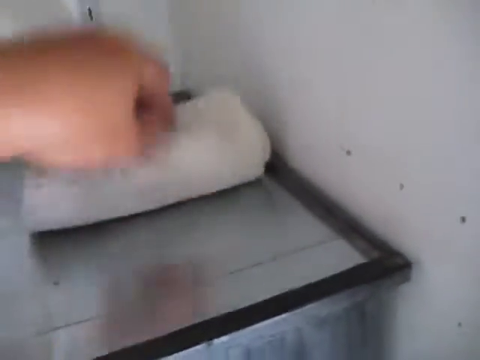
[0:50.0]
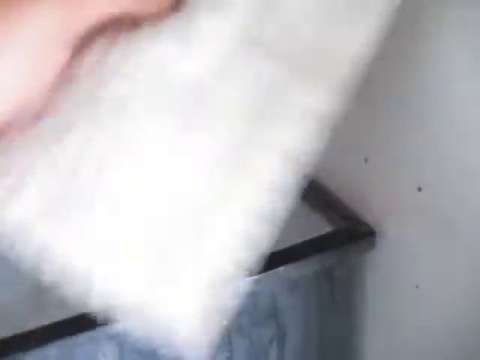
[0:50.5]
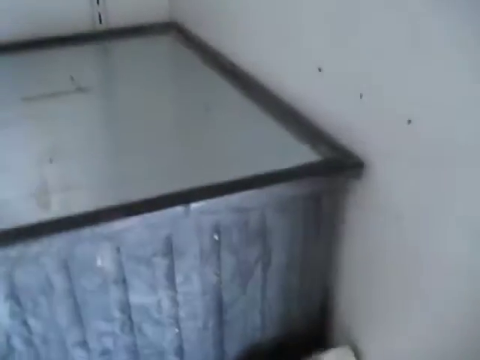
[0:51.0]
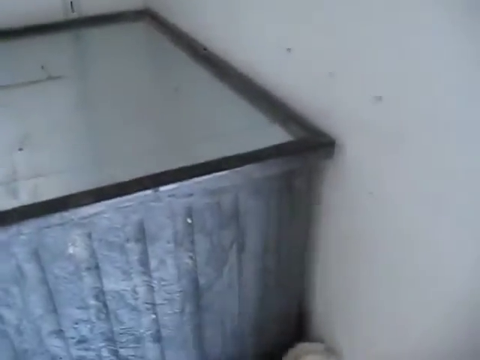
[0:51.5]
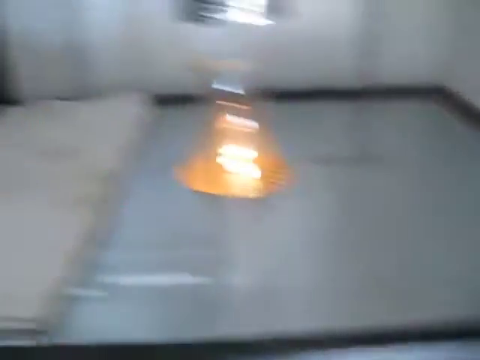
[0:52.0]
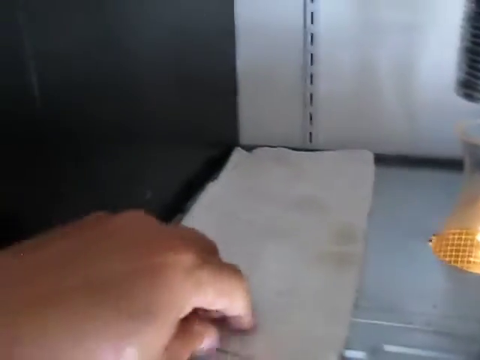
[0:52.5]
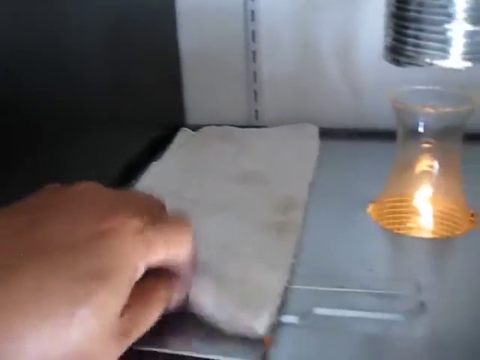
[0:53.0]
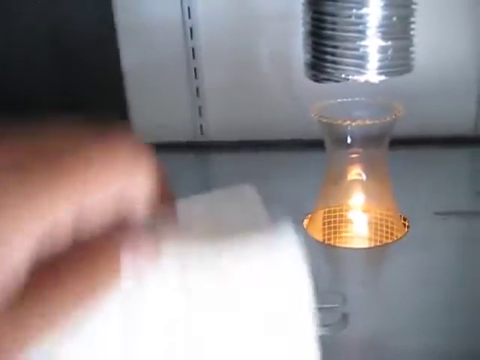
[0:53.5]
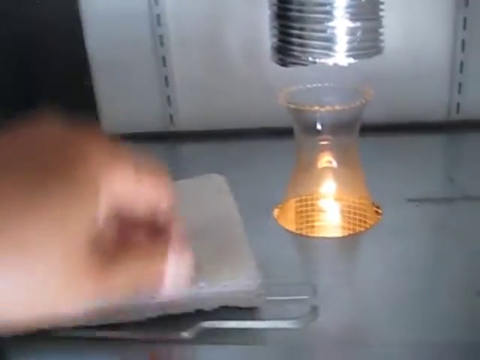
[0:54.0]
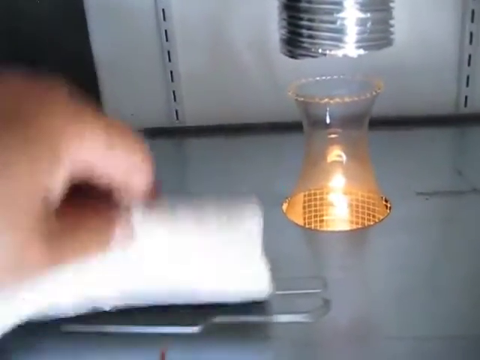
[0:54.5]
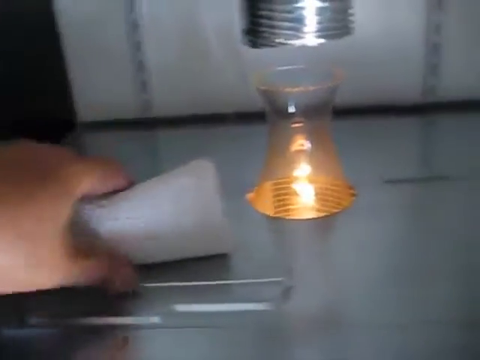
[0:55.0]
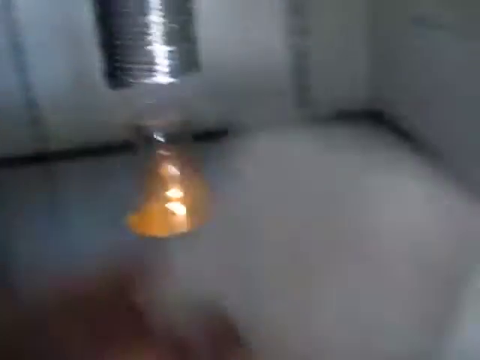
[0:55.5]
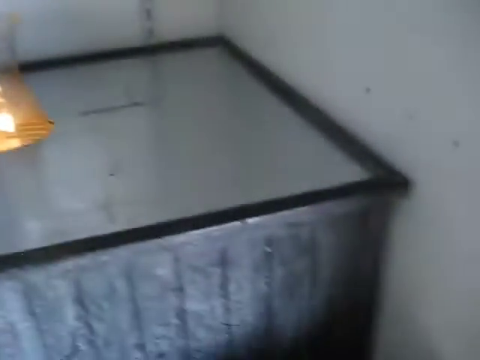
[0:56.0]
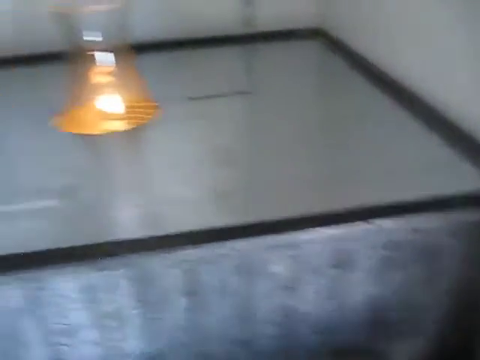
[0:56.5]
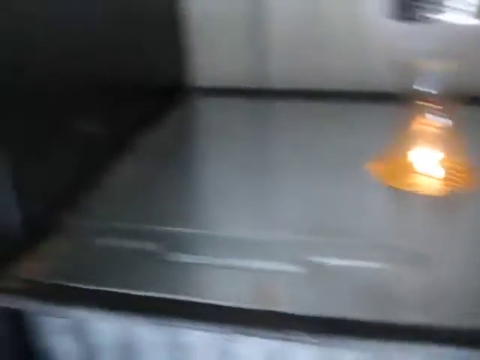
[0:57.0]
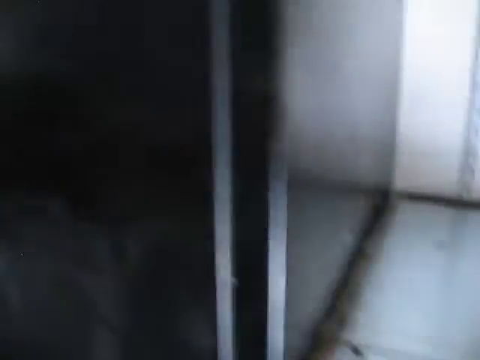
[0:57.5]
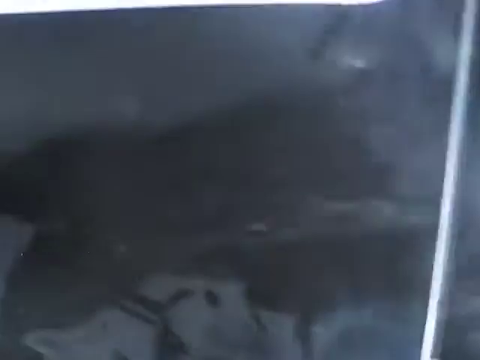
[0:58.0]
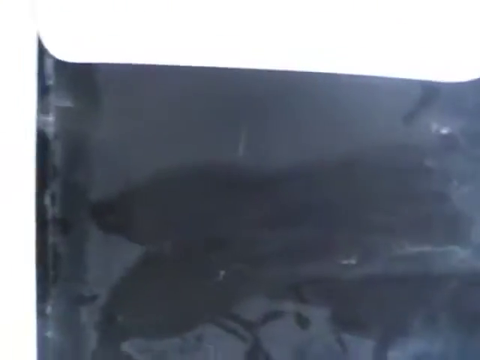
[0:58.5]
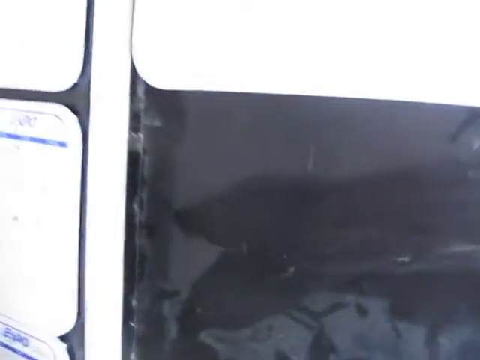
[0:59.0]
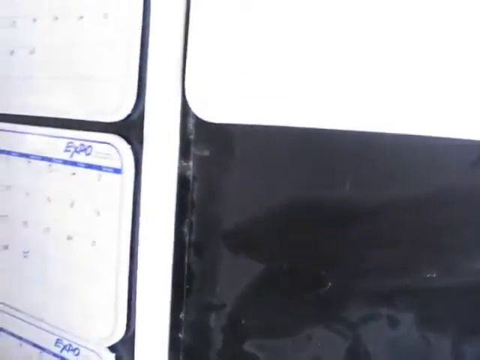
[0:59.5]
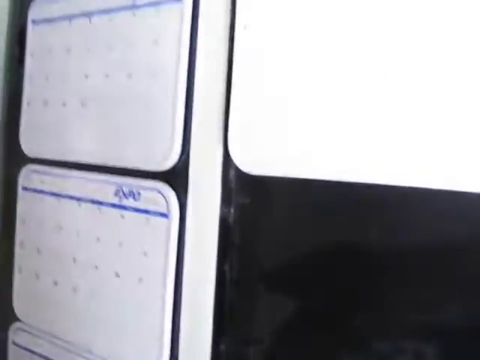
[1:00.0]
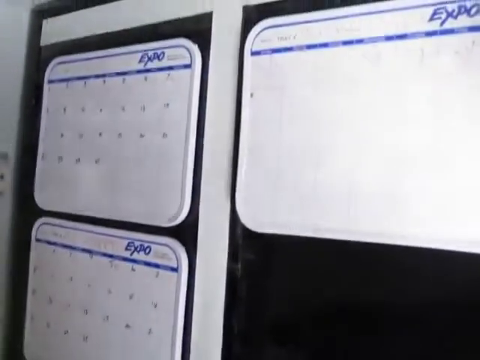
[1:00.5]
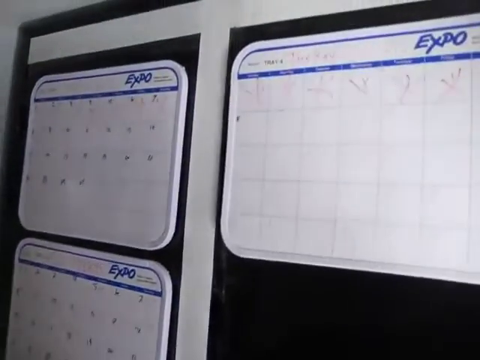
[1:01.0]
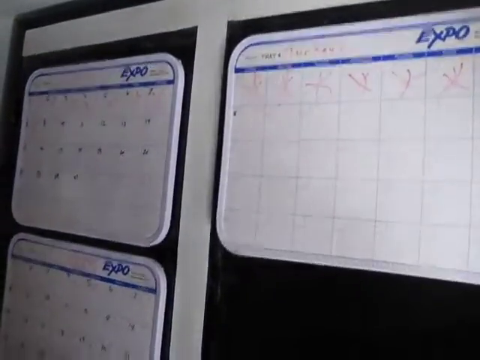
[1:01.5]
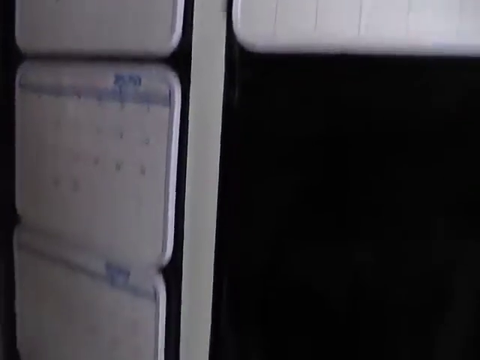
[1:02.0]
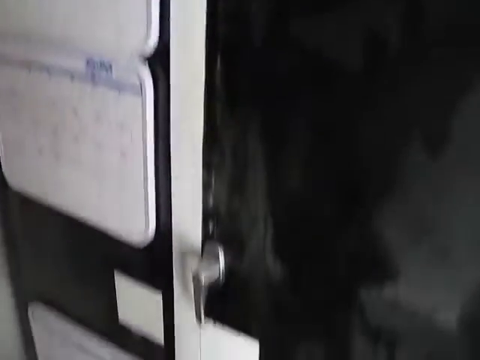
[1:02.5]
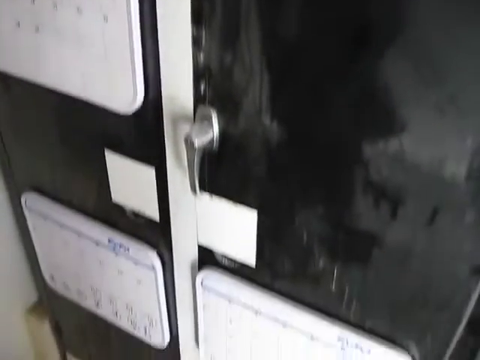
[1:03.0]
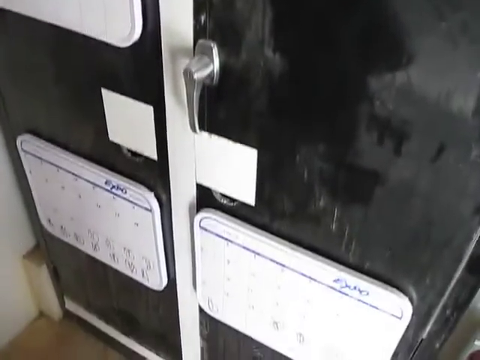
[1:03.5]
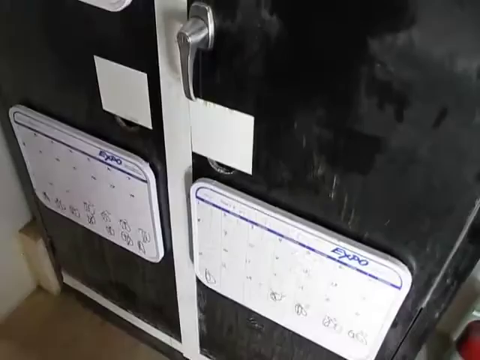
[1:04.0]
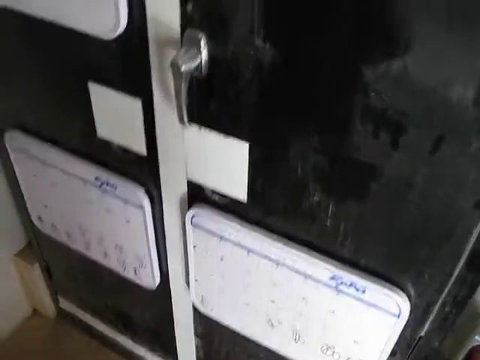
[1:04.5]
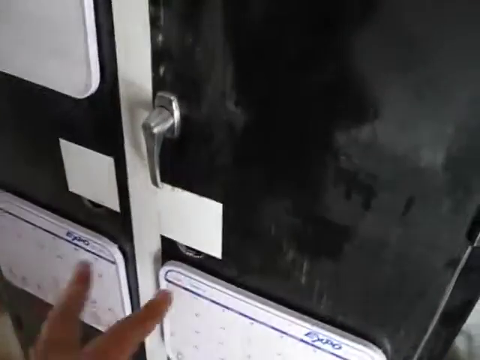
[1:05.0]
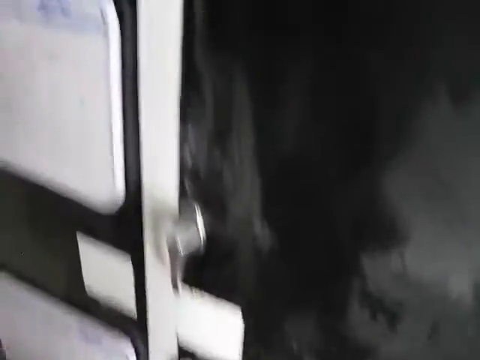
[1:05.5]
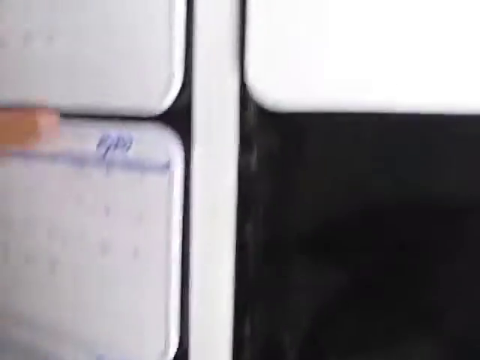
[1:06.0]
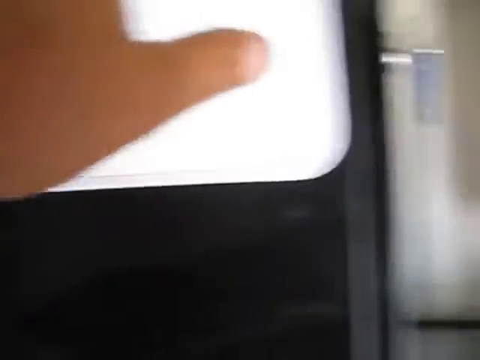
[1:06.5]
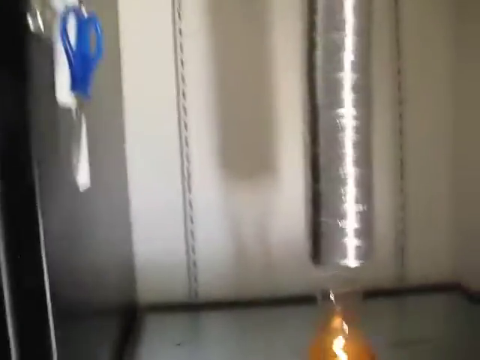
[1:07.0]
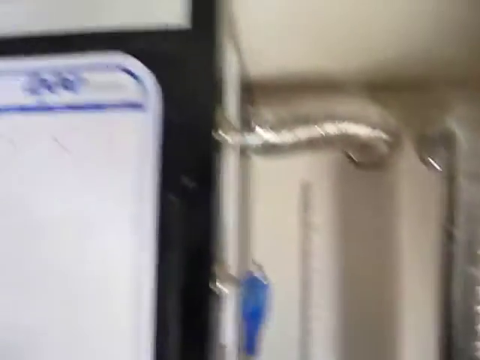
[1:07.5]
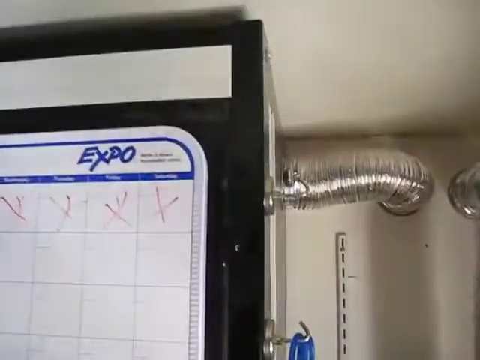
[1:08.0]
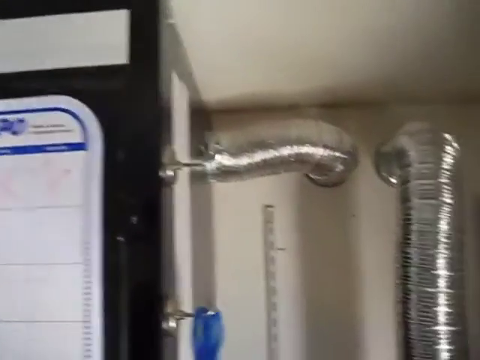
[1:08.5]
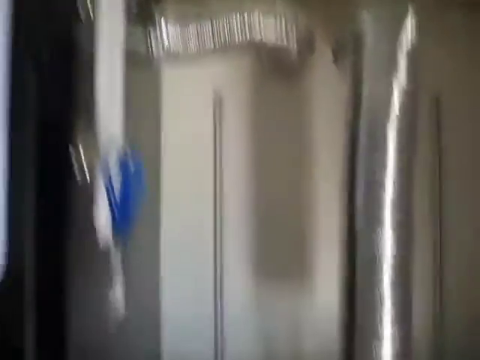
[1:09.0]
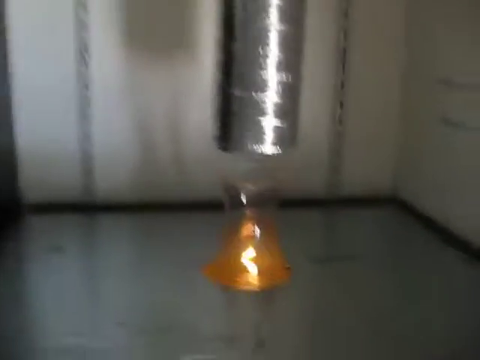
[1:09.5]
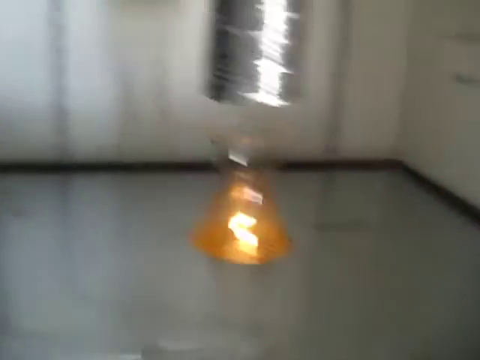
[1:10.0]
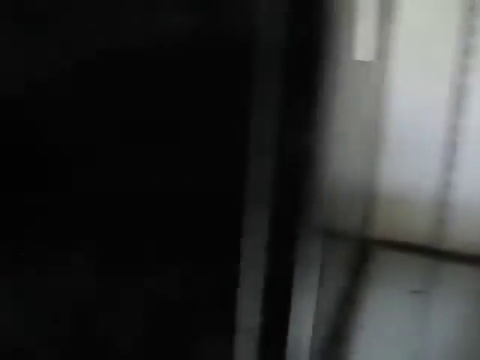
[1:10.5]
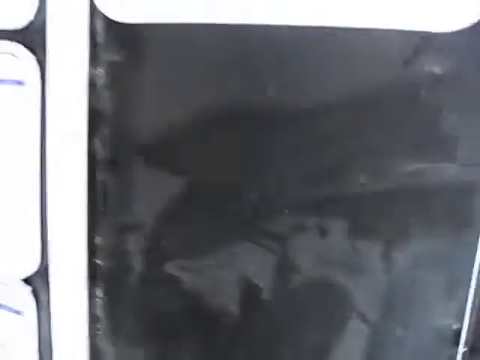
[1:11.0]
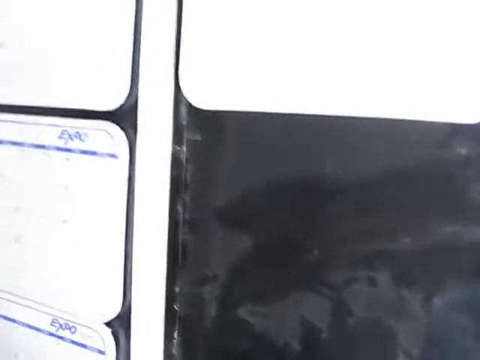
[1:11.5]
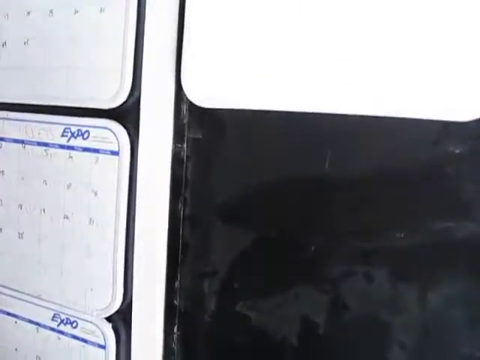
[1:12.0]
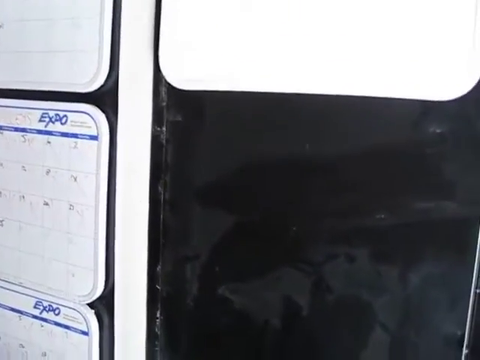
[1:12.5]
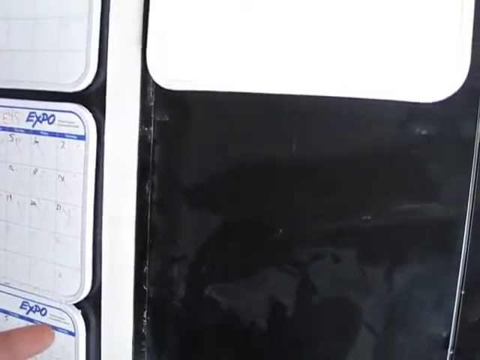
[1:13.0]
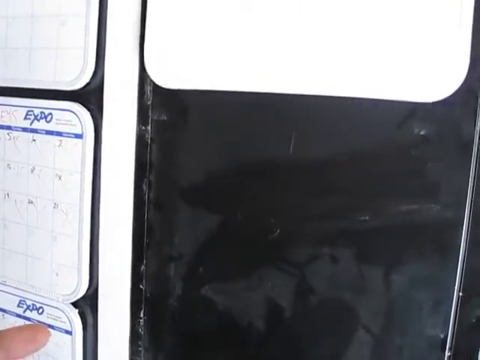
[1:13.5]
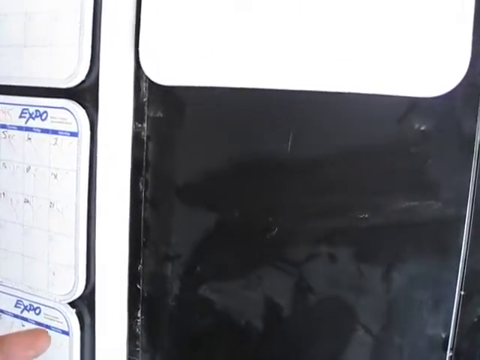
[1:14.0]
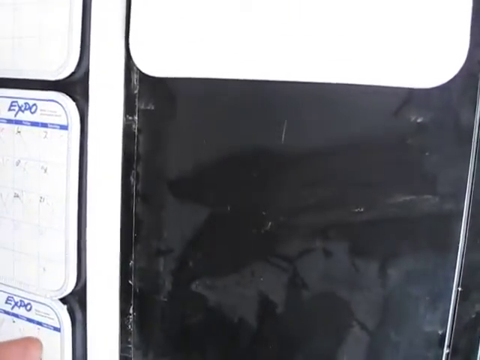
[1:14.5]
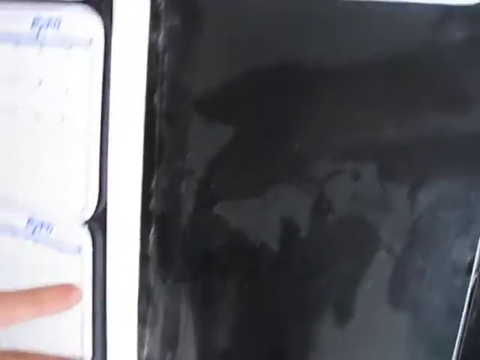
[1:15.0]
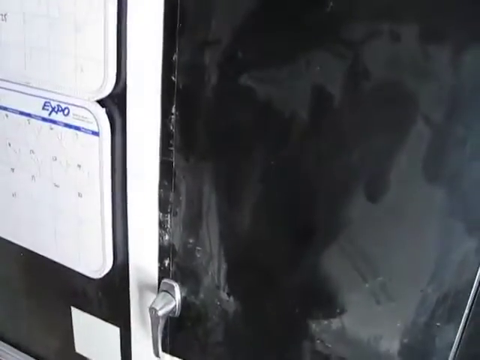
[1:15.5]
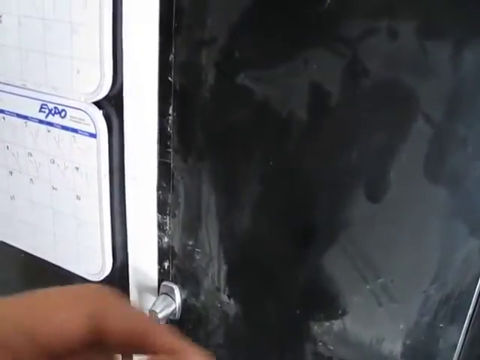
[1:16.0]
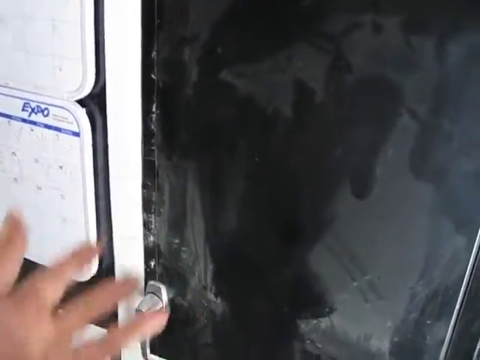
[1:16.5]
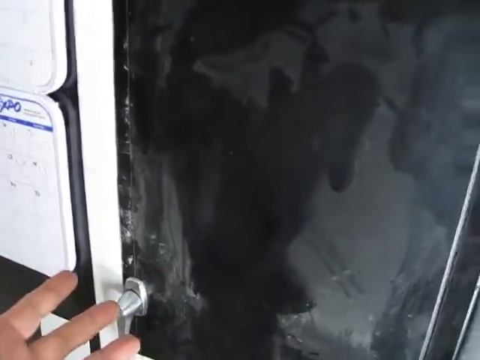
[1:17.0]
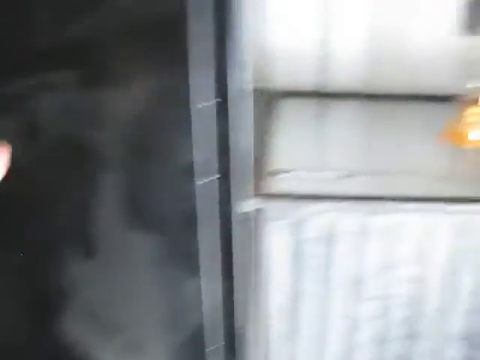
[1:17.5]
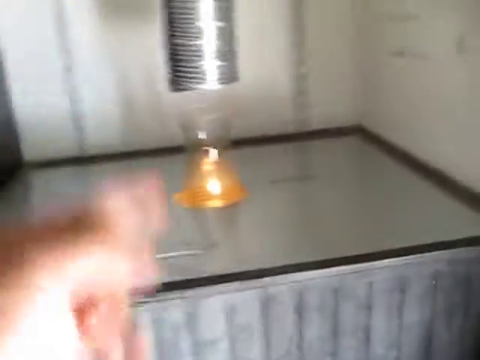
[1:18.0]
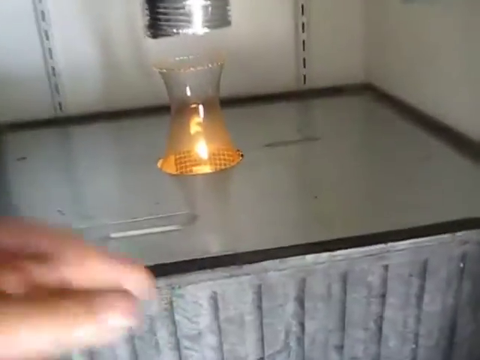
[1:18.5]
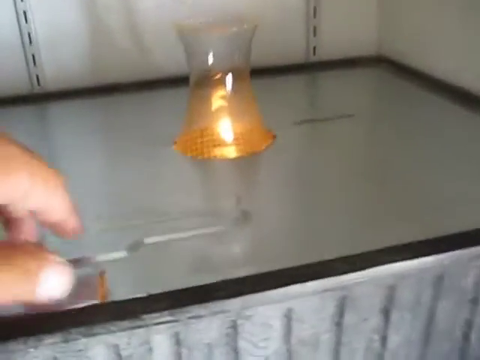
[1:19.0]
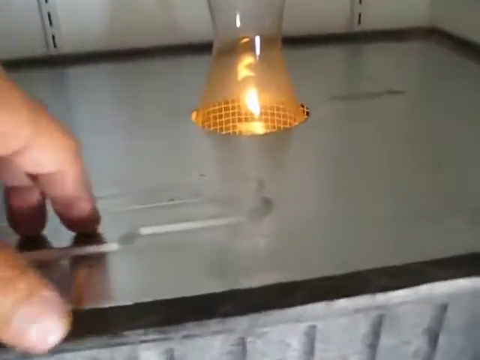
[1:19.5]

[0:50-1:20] The hand folds the white towels that had been covering the corner side of the machine, revealing a flat surface that is silver and metallic. The other part of the door seems to have work schedules: three work schedules are placed there, one of which seems to have X's written over the days, while the other two seem to show the calendar of the month's days, running all the way down within a black locker. The camera then moves around, and a key is visible within the locker, possibly the key used to open the lockers.